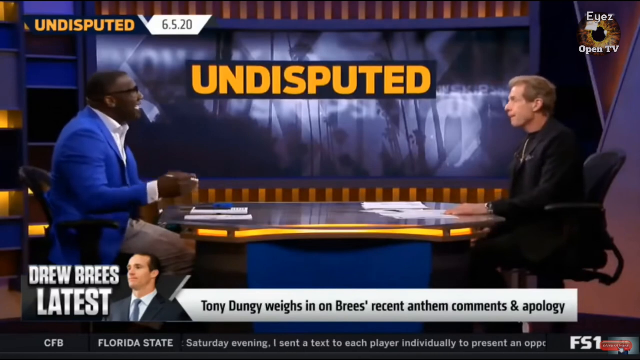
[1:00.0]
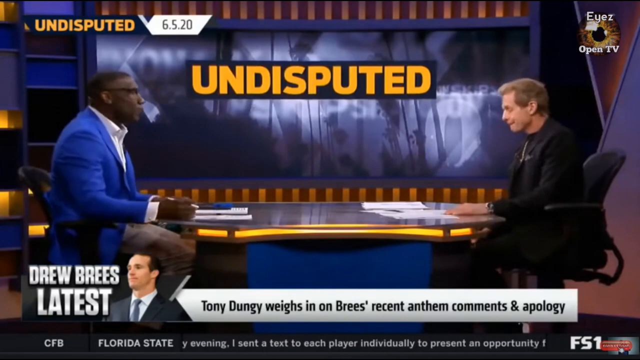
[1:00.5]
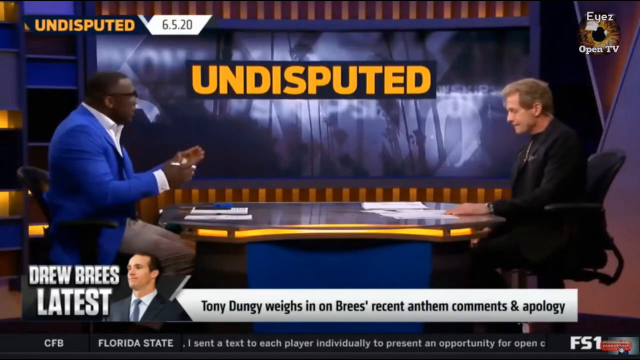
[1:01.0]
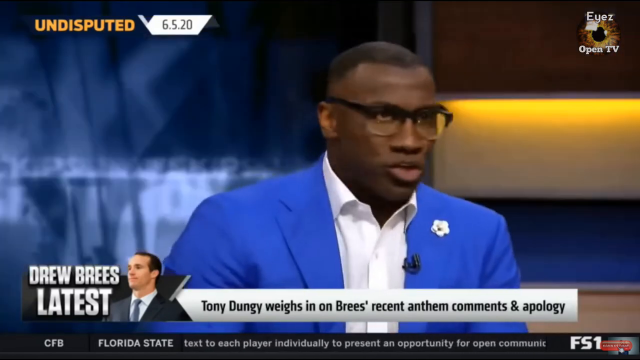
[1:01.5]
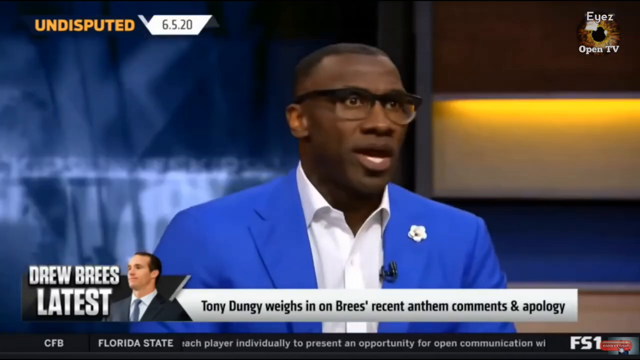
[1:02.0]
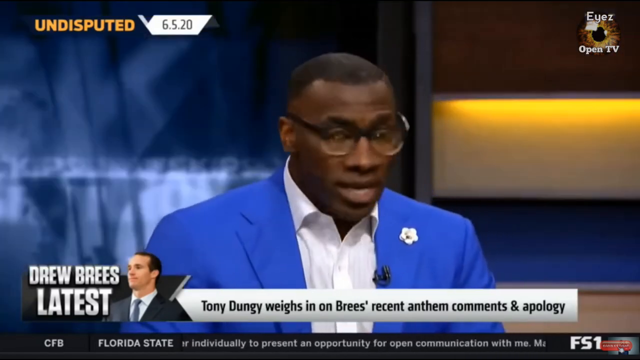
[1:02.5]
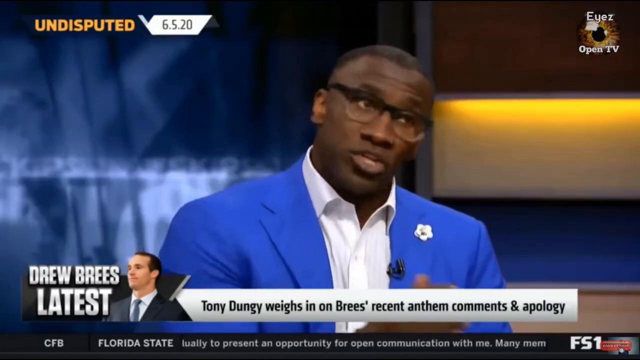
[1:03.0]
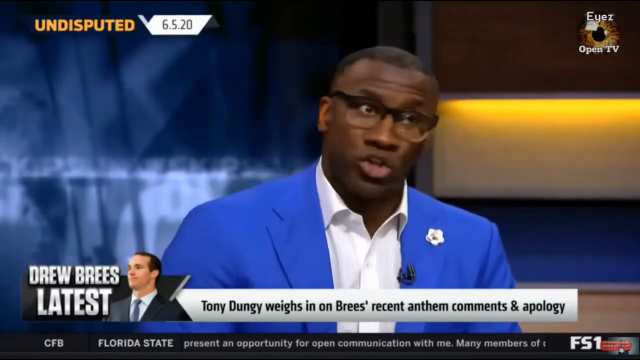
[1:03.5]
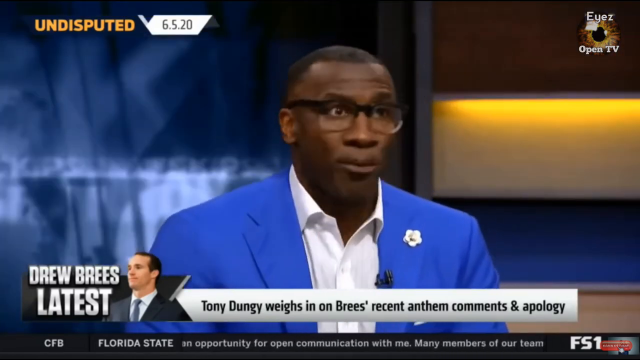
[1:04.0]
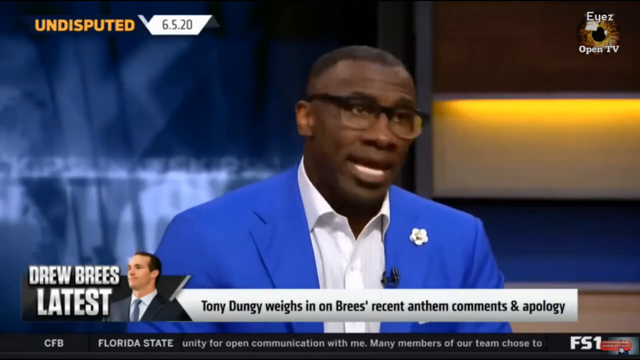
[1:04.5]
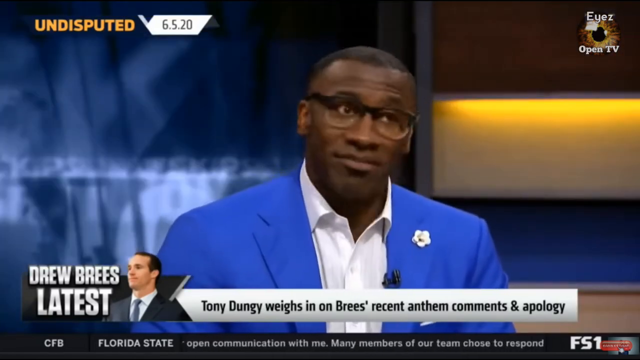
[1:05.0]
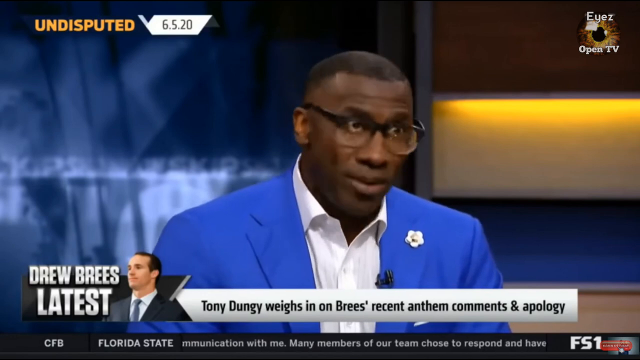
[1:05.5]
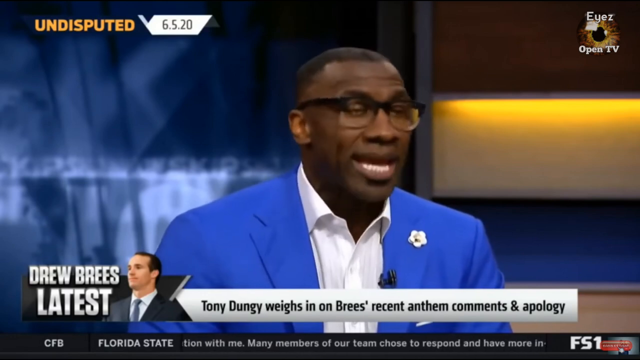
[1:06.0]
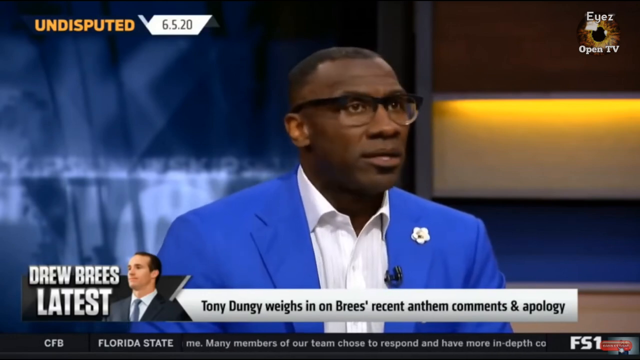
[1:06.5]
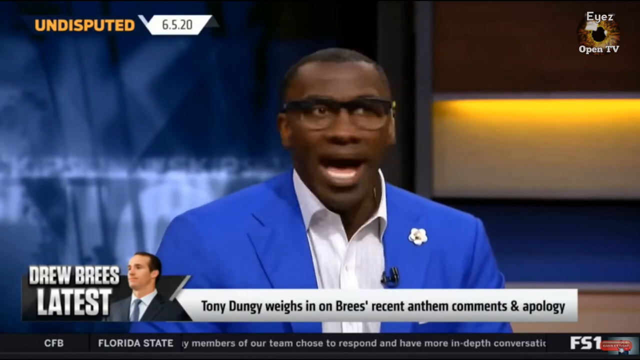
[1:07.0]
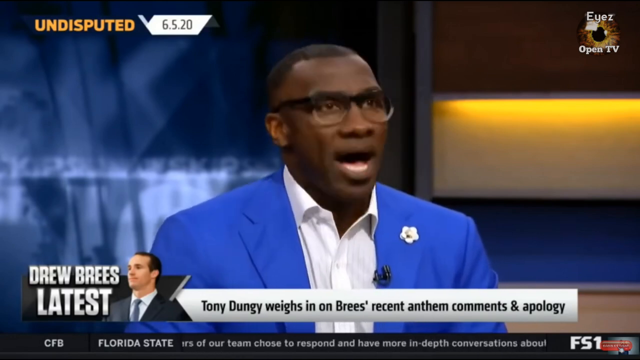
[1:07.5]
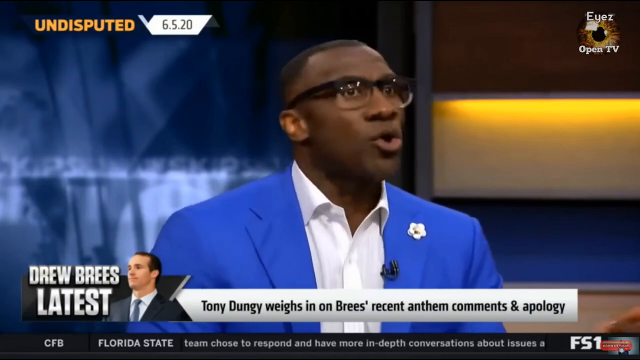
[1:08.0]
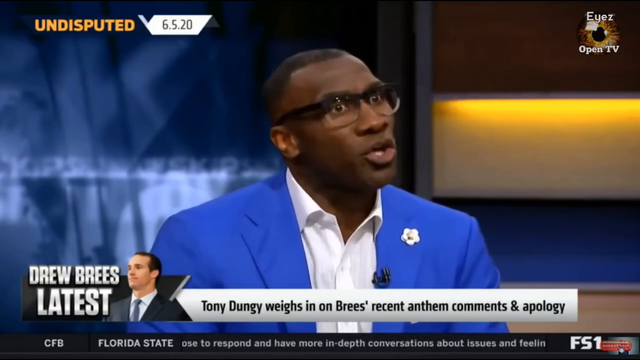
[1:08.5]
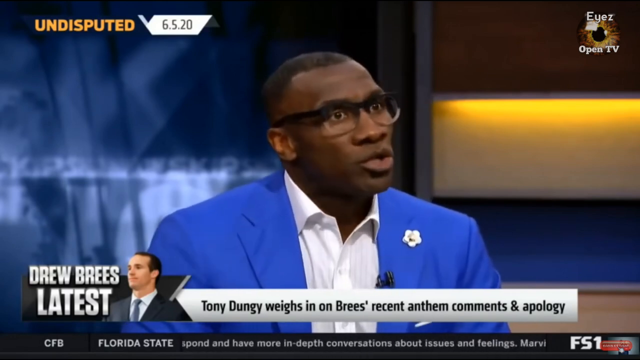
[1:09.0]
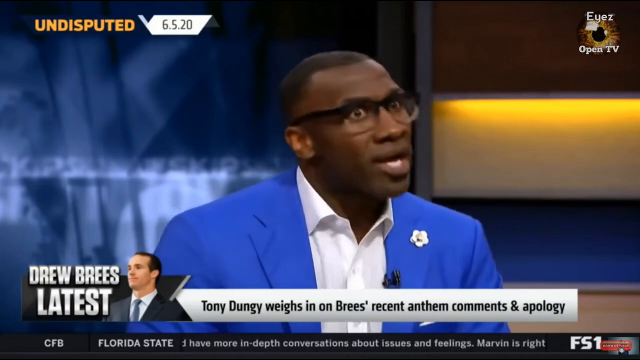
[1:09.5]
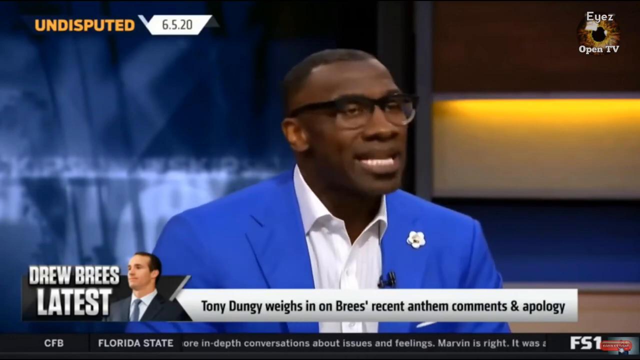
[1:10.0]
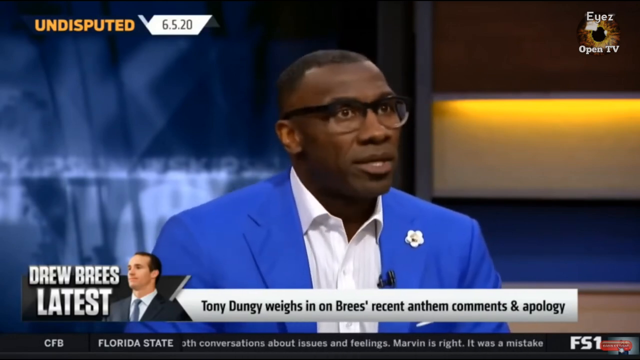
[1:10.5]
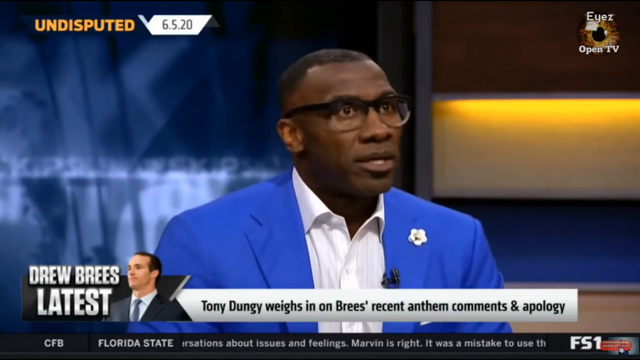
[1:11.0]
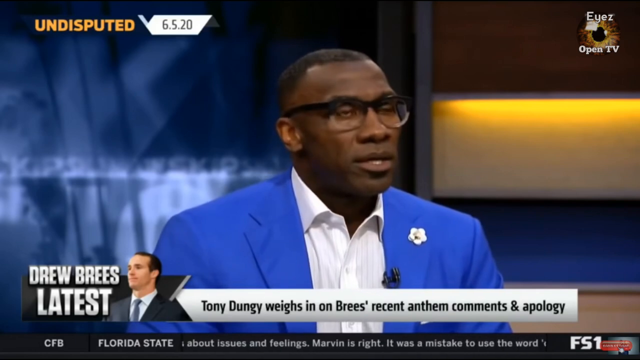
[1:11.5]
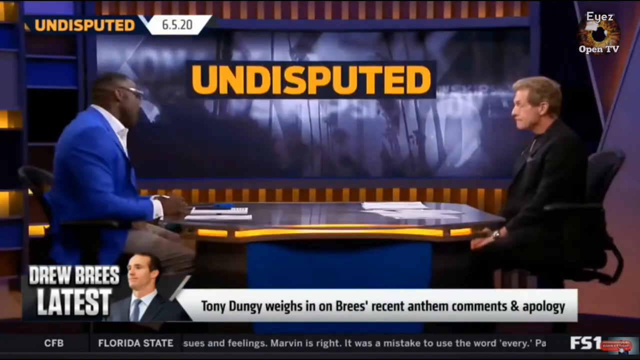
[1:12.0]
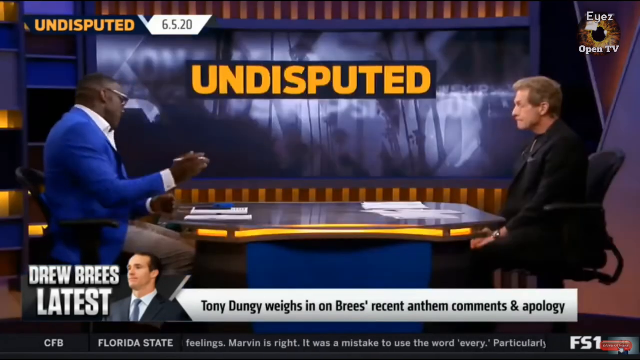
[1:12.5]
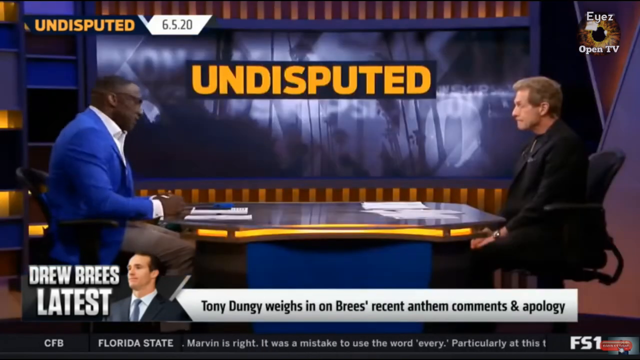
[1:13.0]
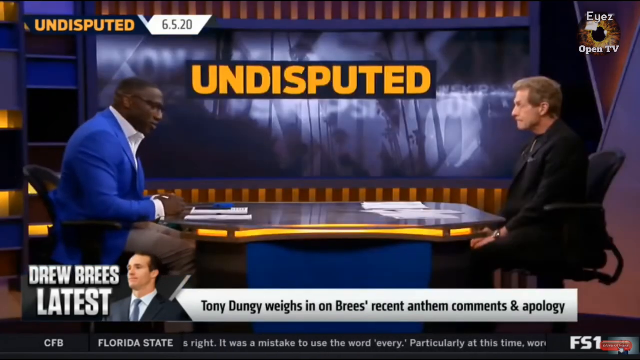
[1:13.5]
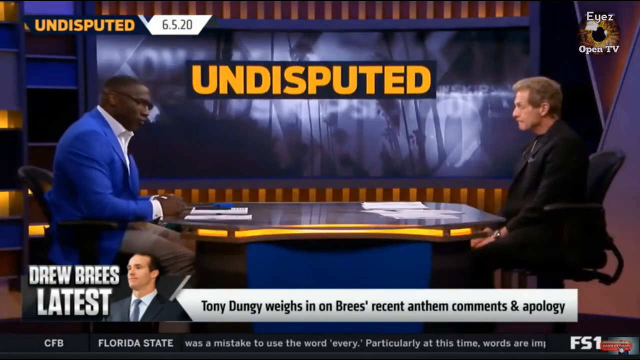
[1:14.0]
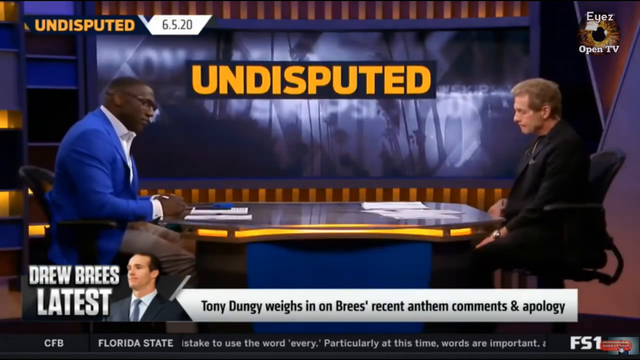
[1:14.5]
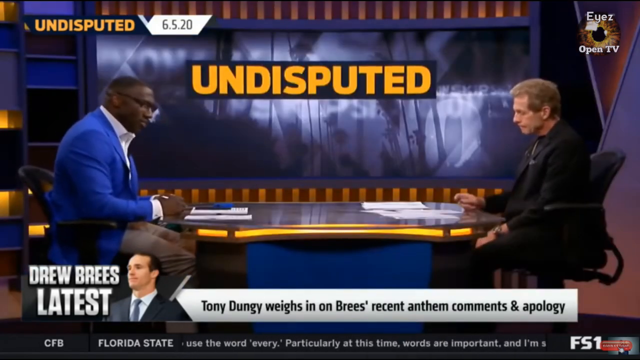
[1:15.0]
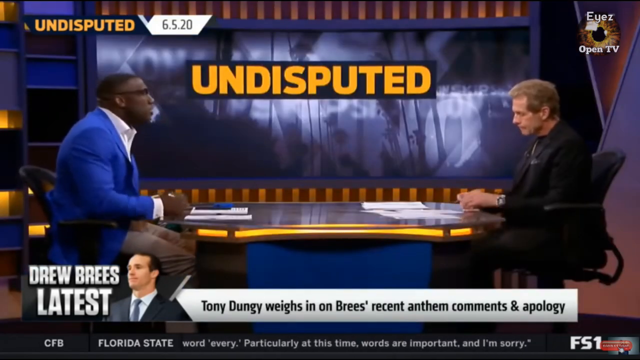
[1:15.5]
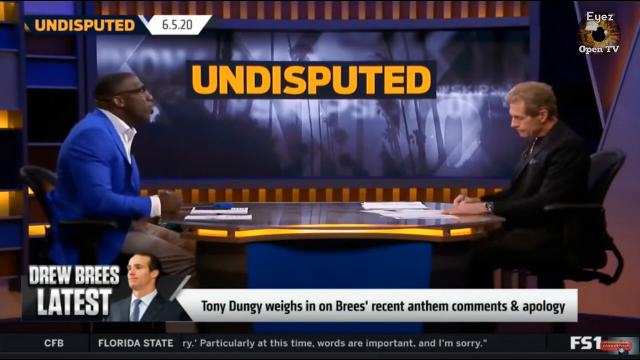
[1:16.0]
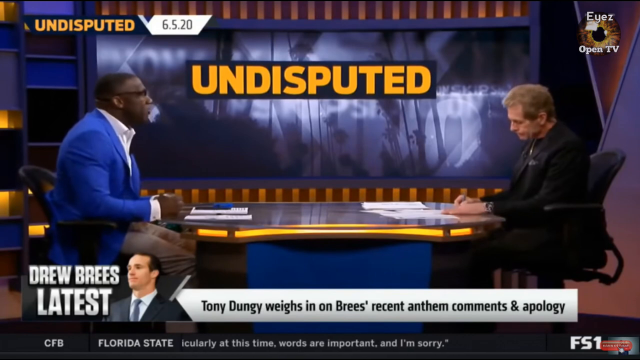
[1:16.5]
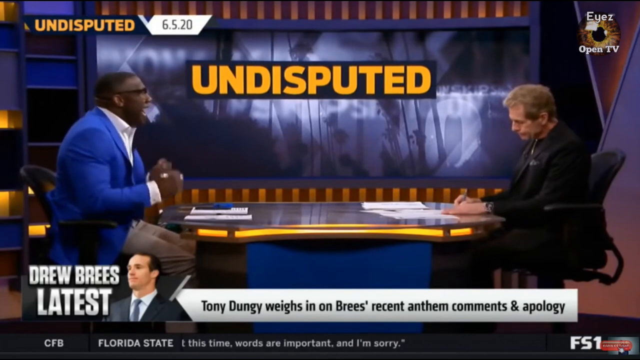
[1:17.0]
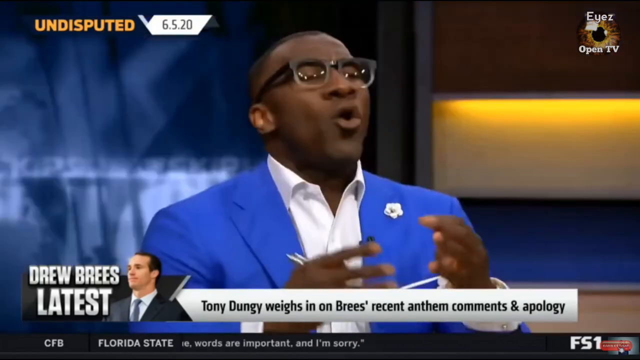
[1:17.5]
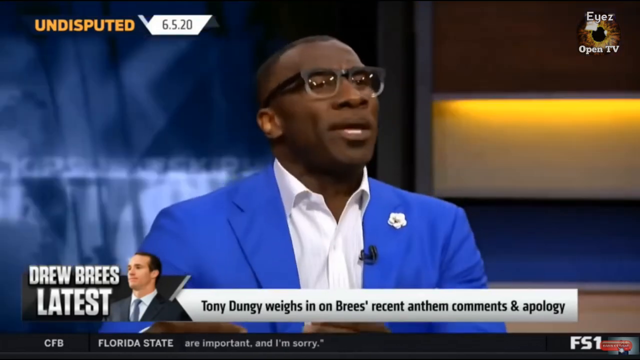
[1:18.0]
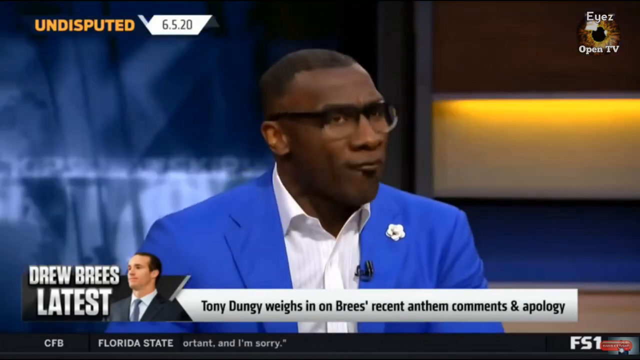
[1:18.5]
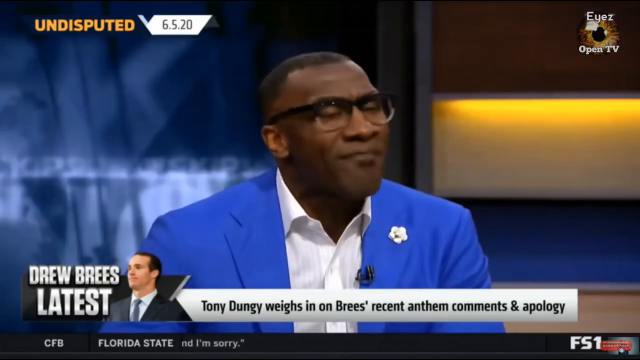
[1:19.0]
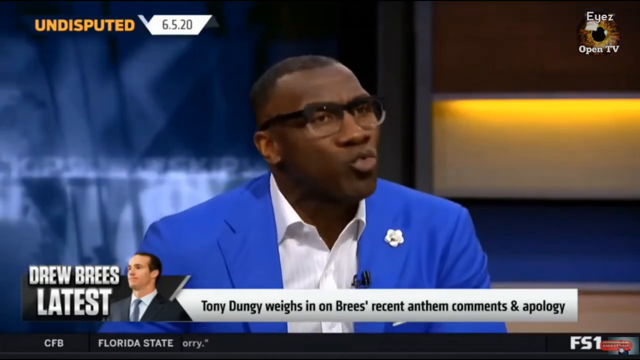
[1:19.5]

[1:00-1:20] In the upper left-hand corner, "UNDISPUTED" appears in all capital letters, with "6.5.20" next to it in black font. In the upper right-hand corner is "Eyez", spelled E-Y-E-Z, with "Open TV" beneath it. Shannon Sharp has short black hair, brown skin, and glasses with clear lenses and what appear to be black frames. He wears a blue suit blazer over a white button-down shirt, with a flower pinned to his suit and a small microphone clipped on; the lower part of his body is not visible. At the bottom, "Drew Brees latest" appears with an image of a white man, along with text beginning "Tony Dungy weighs in on Brees recent anthem". Shannon Sharp still does most of the talking. He nods and shakes his head in different directions, up and down and left and right, his eyes get bigger, he waves his hand, turns to the side, bangs on the table a little, and uses his hands as he talks.